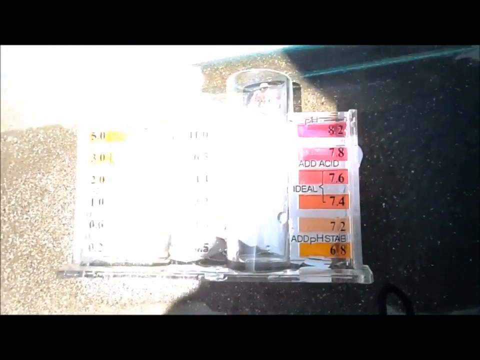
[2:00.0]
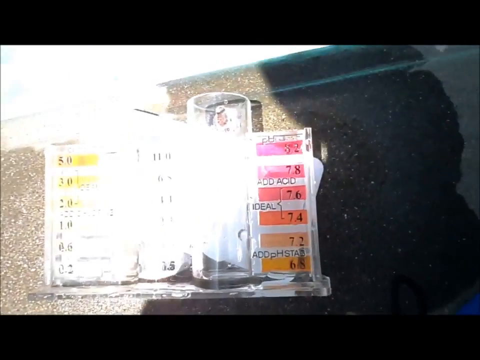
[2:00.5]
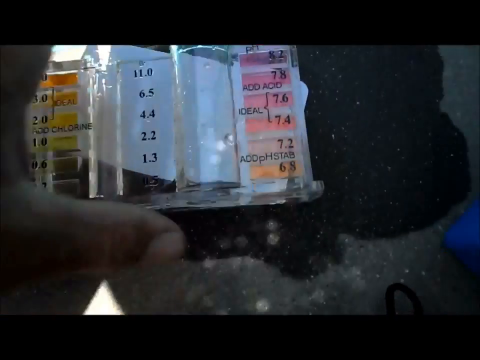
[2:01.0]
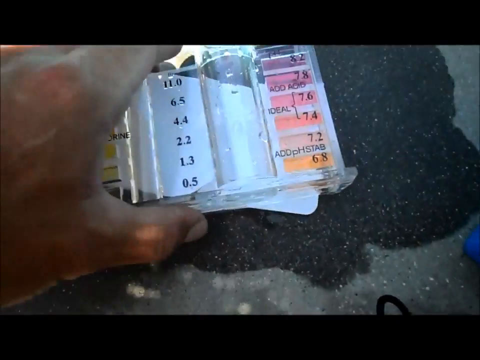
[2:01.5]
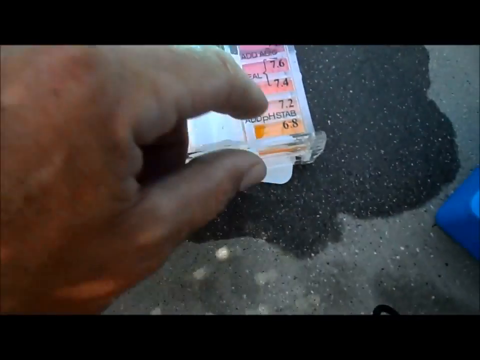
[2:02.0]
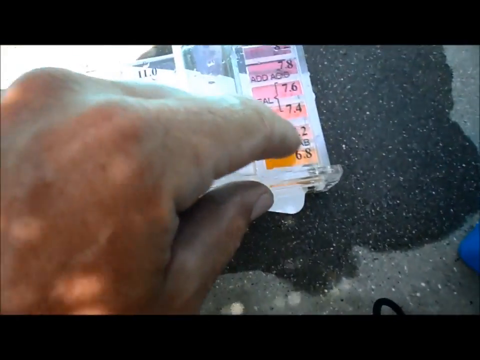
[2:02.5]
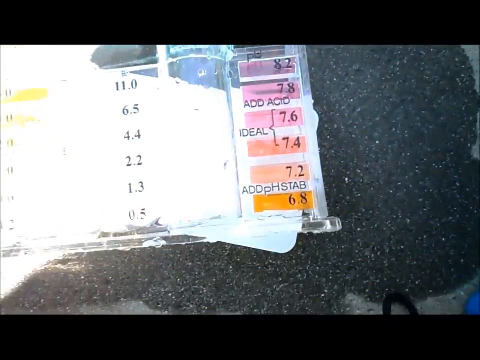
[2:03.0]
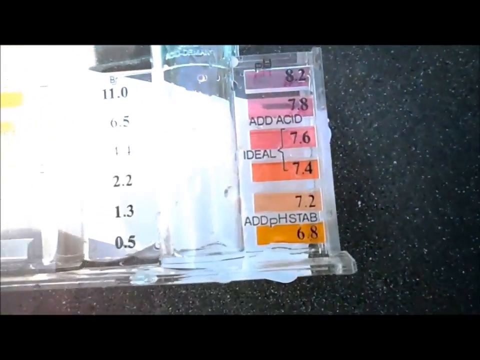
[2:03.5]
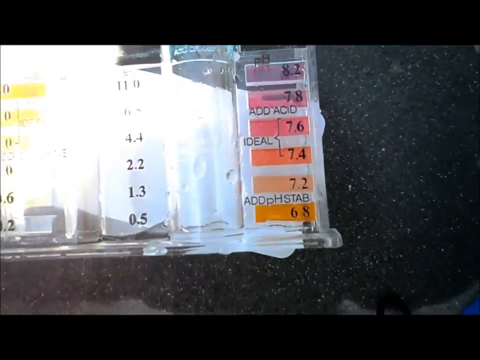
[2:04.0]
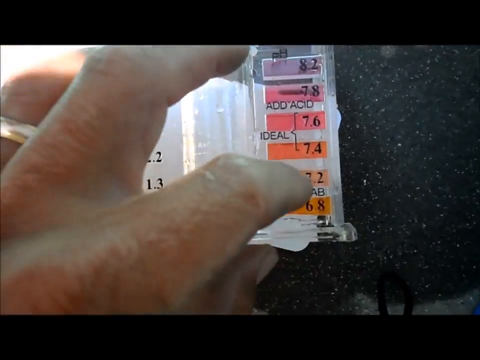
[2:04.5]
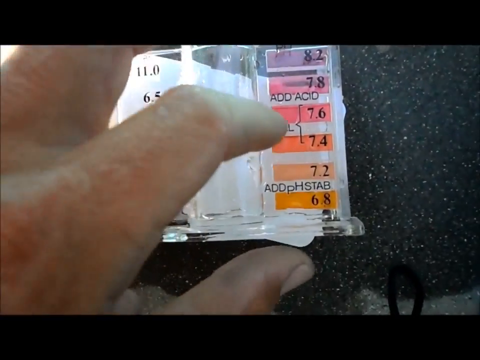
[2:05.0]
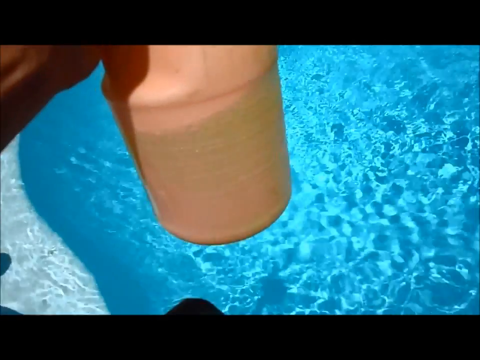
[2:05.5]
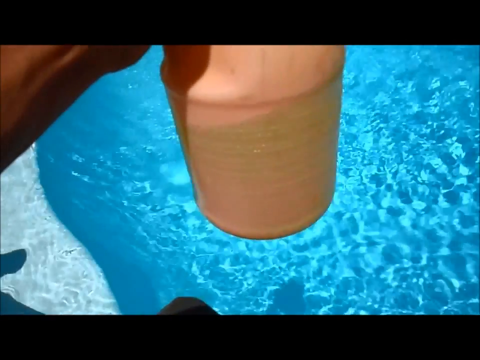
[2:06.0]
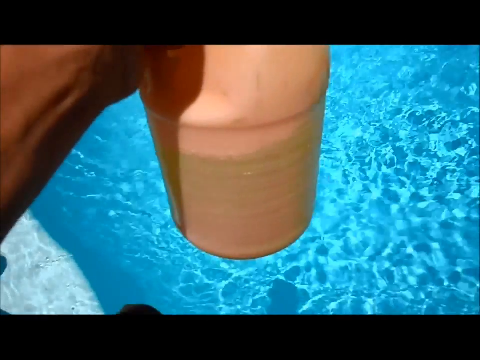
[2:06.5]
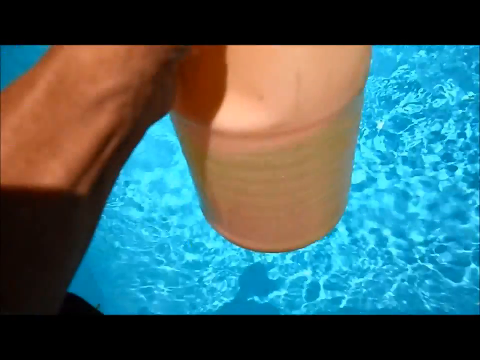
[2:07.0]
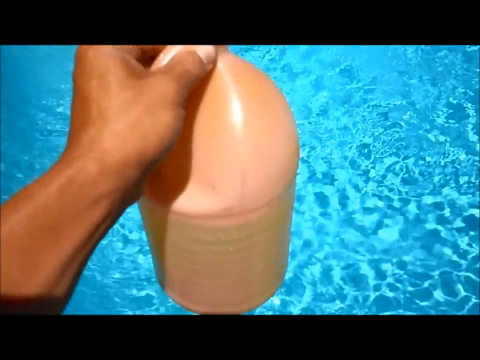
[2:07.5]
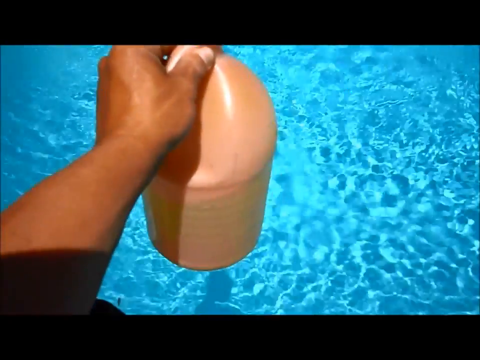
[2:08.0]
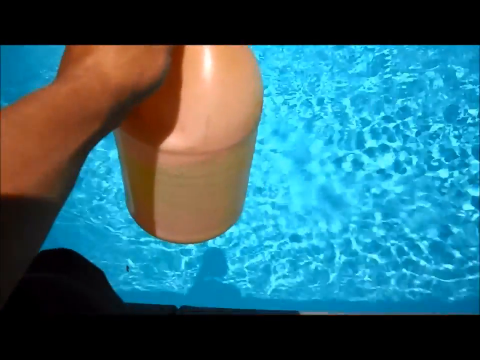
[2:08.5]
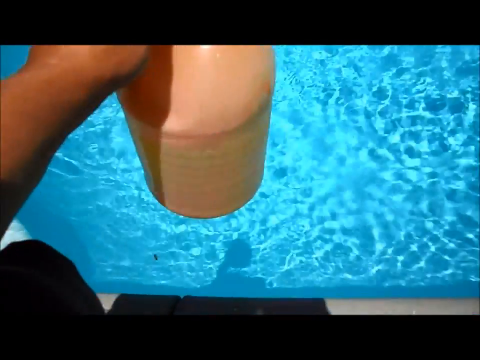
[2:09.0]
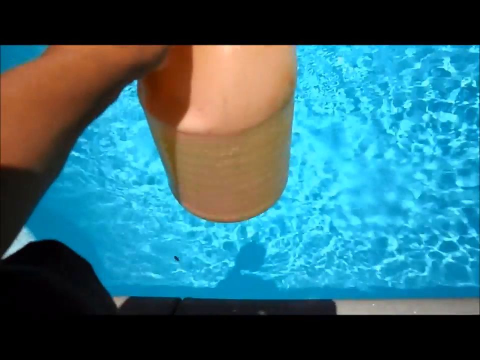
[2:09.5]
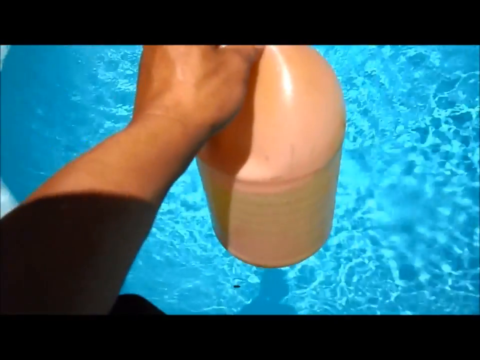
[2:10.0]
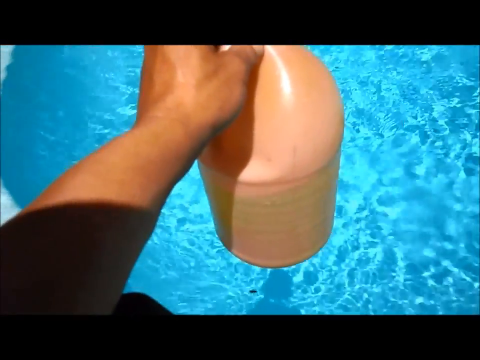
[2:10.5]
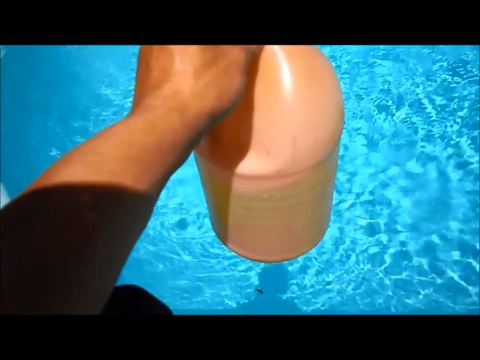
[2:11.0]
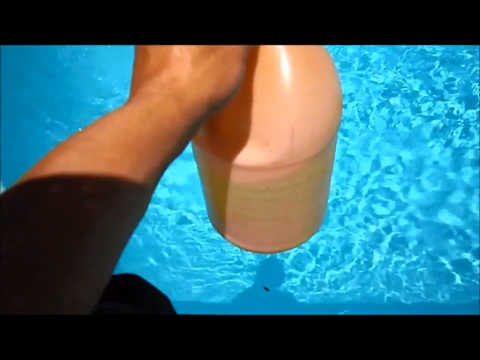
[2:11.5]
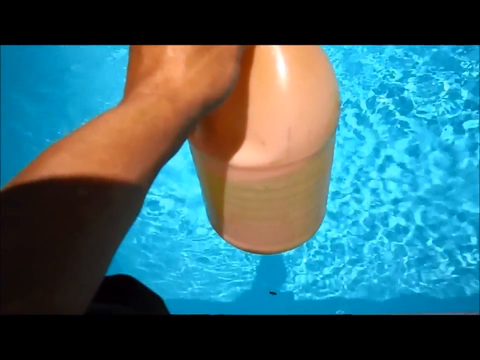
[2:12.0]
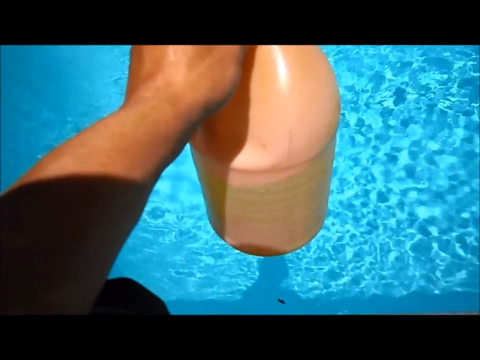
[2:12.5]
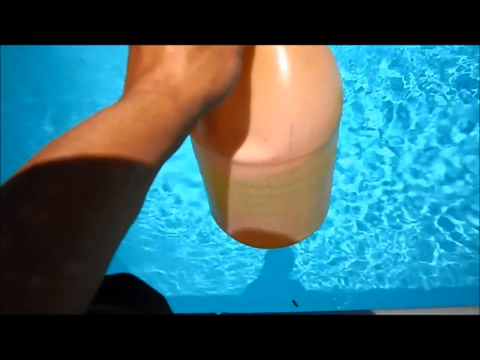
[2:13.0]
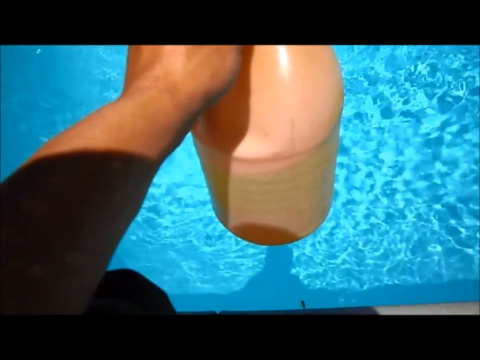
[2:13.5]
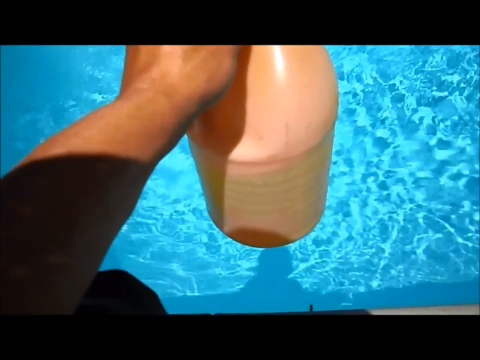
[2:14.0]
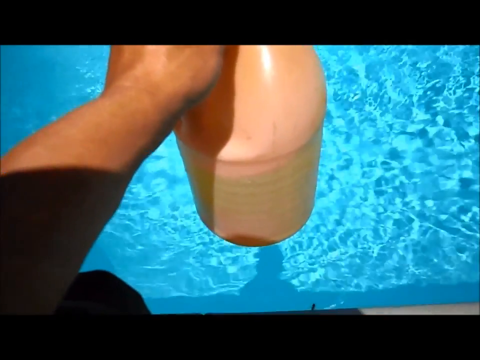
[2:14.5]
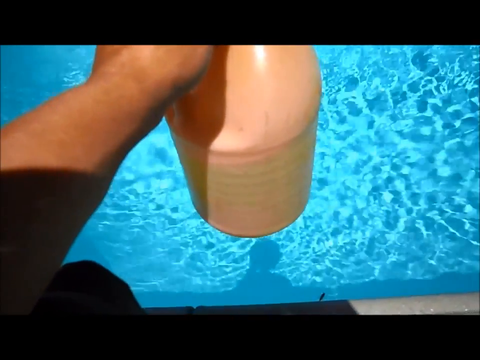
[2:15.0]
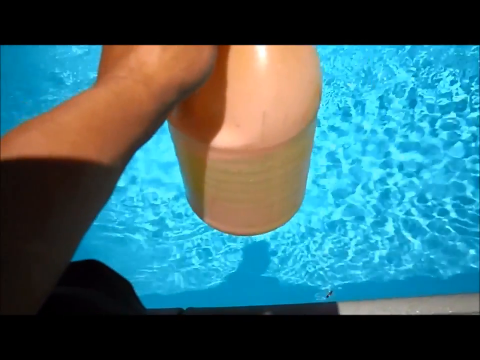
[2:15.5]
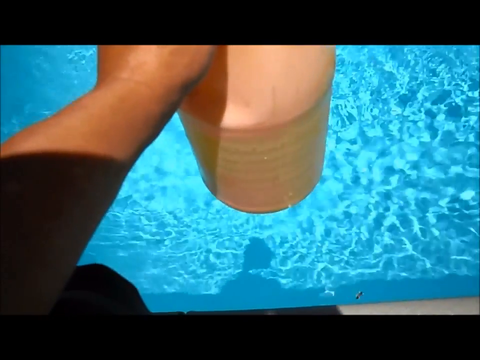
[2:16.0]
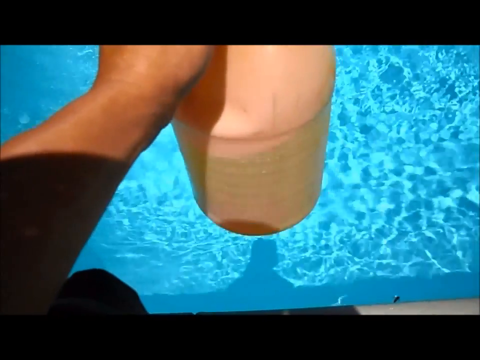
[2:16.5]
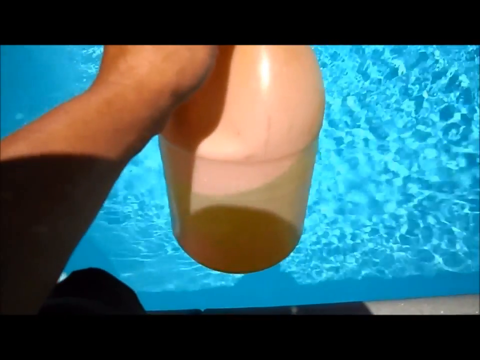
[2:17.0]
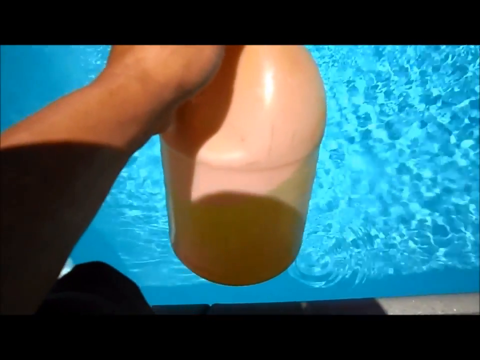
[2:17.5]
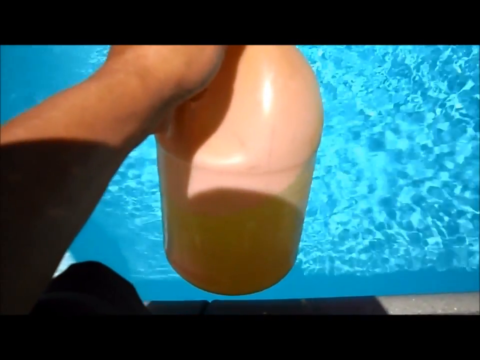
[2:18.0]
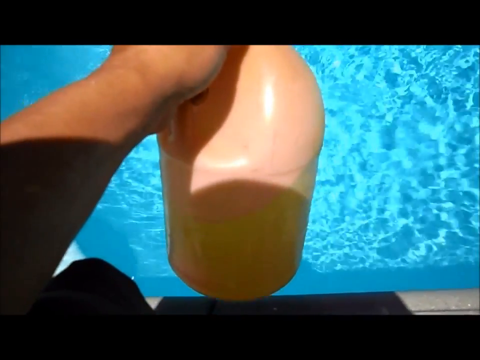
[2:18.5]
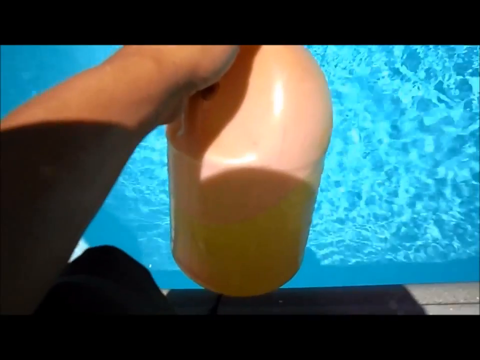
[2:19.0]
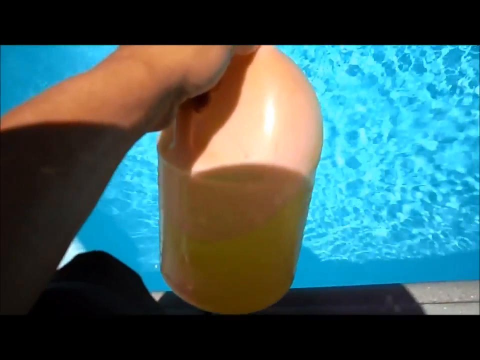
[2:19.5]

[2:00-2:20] The test kit numbers remain on screen for a couple of seconds with the man, then the video cuts to him holding a light brown jug over the pool, holding it pretty steadily. His left arm is visible on the left side of the frame holding the jug out, and shadows fall across the jug and his arm in the bright sun. The pool fills most of the shot and the water is moving. The top of the jug cannot be seen, and there doesn't appear to be any writing on it. The jug looks about half full of a liquid that cannot be identified. There are only two shots, and the second lasts longer than the first.